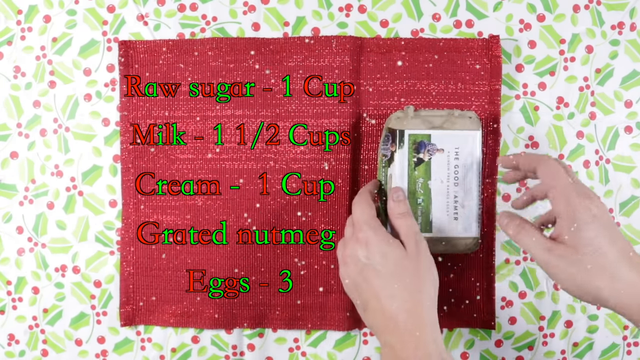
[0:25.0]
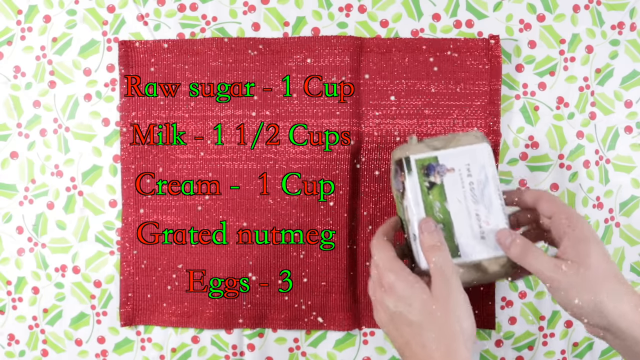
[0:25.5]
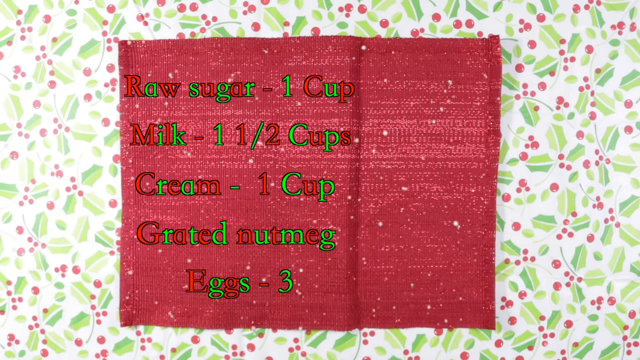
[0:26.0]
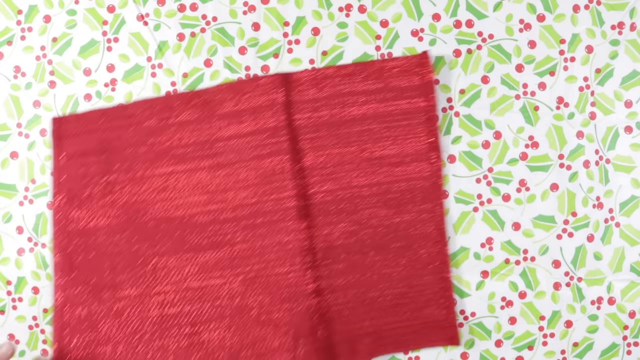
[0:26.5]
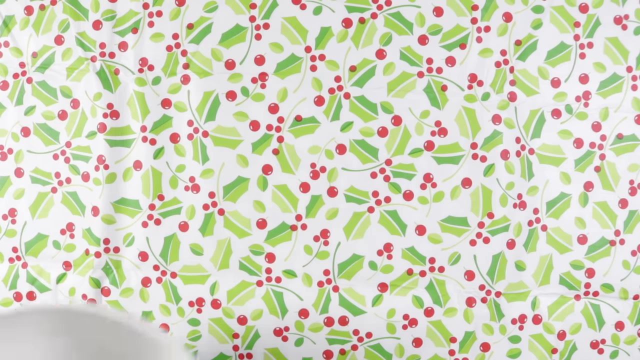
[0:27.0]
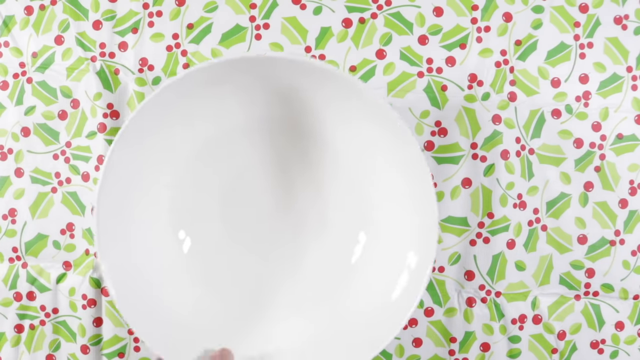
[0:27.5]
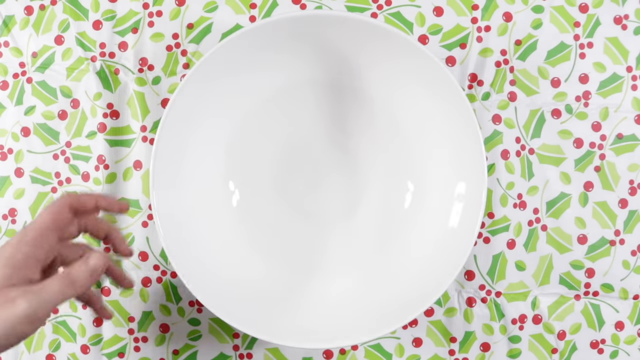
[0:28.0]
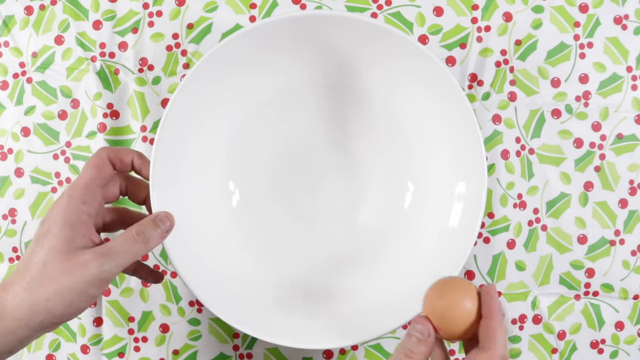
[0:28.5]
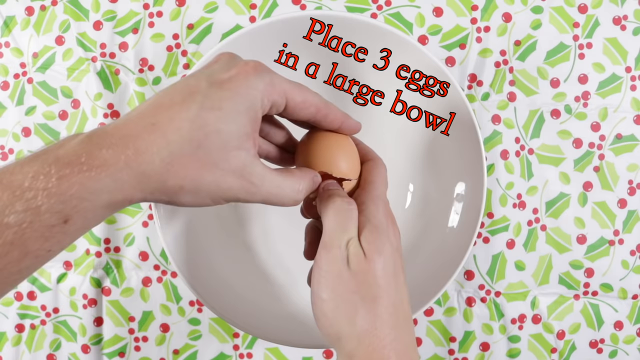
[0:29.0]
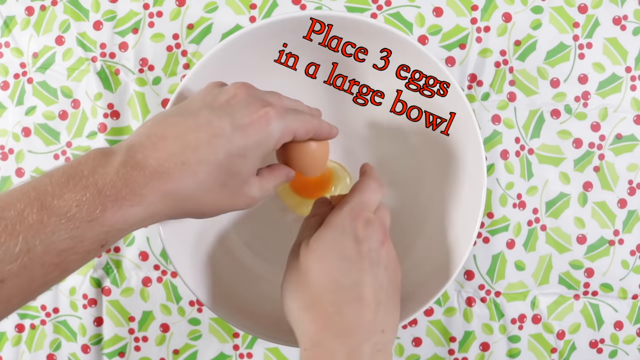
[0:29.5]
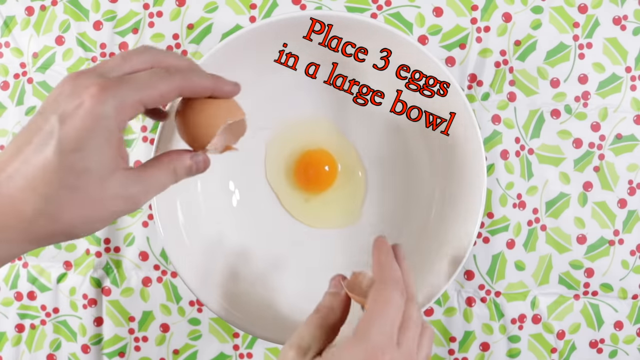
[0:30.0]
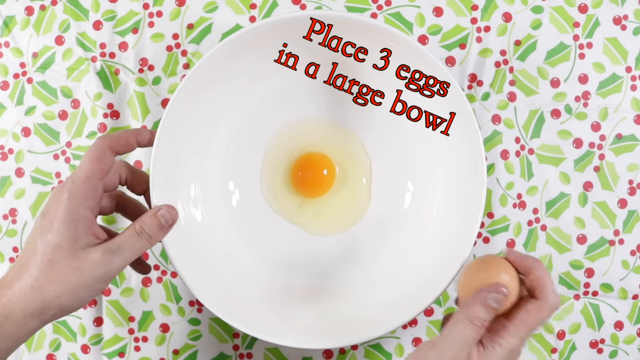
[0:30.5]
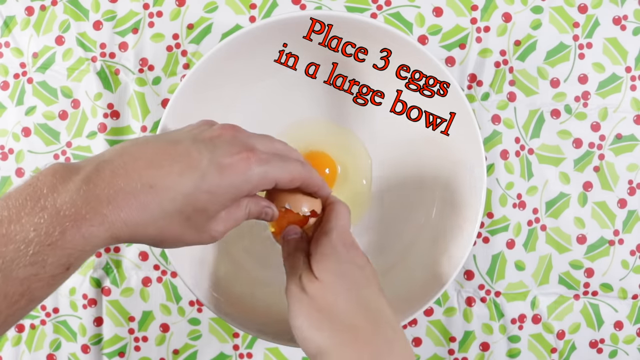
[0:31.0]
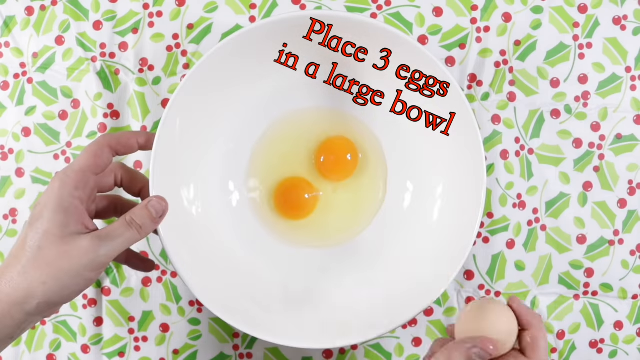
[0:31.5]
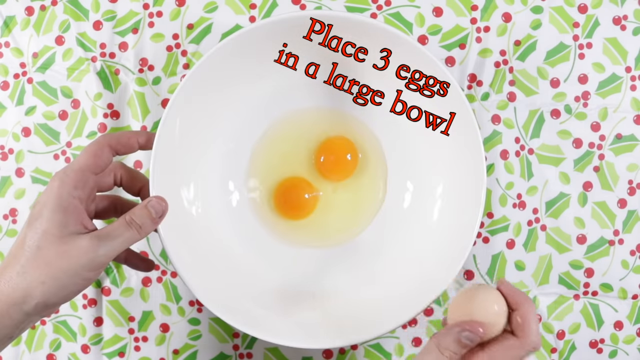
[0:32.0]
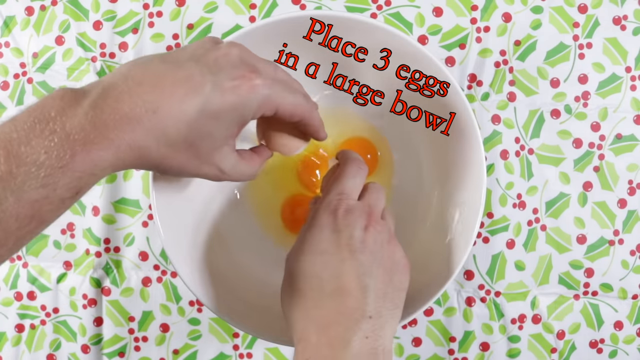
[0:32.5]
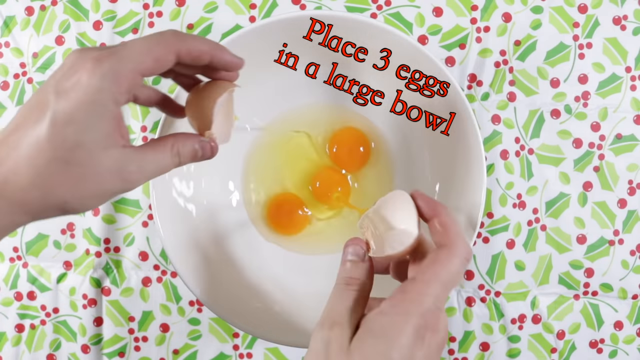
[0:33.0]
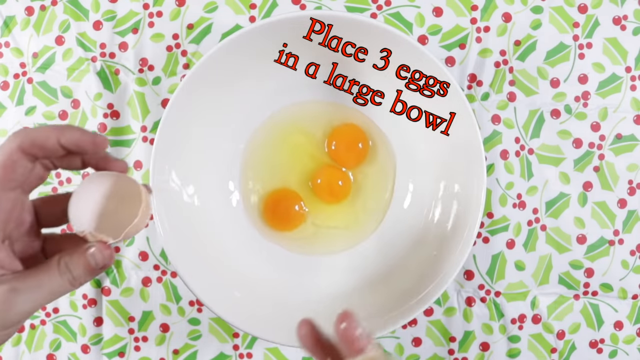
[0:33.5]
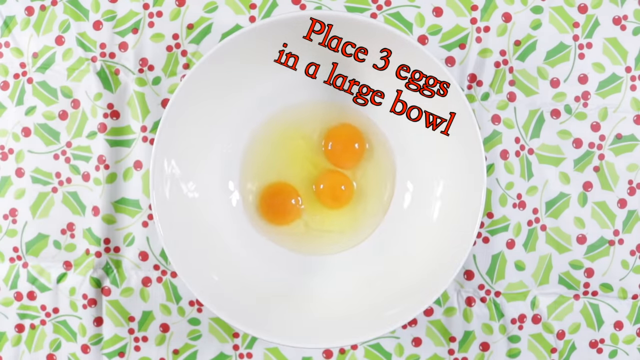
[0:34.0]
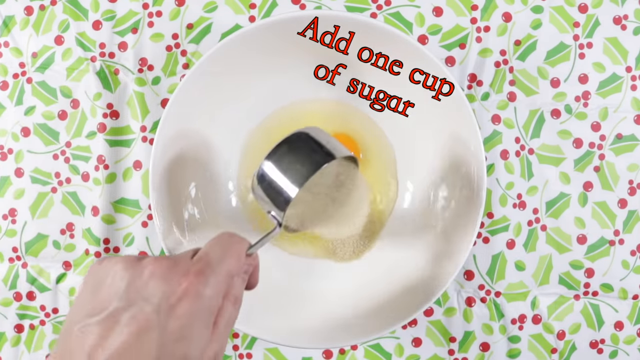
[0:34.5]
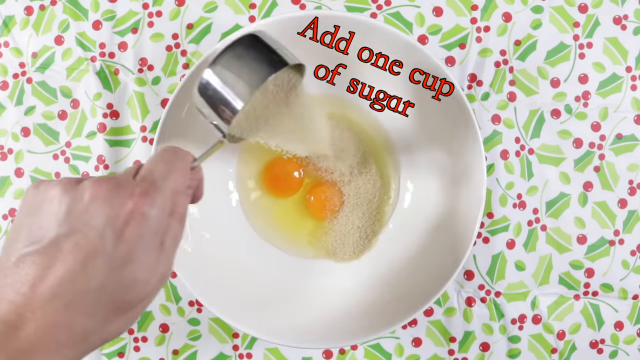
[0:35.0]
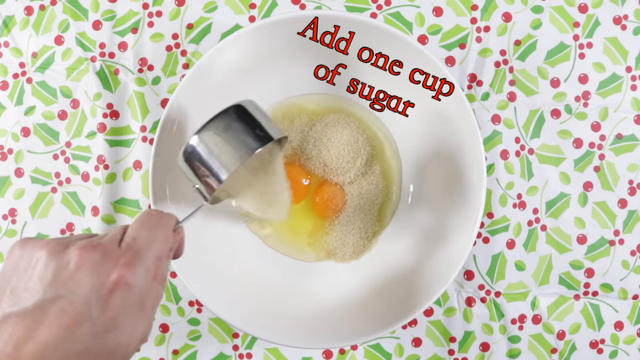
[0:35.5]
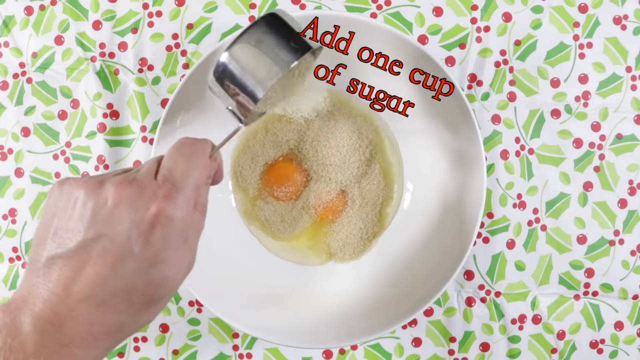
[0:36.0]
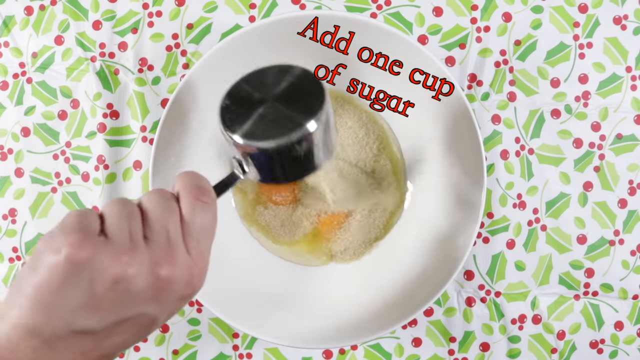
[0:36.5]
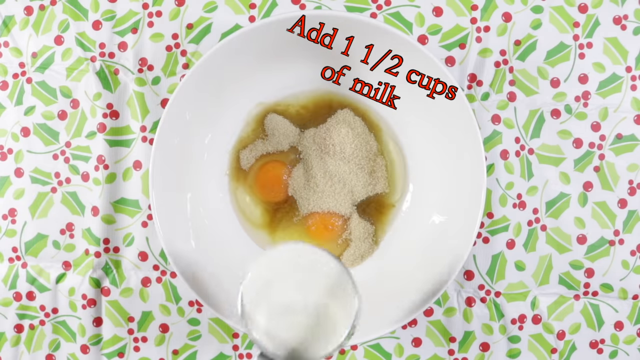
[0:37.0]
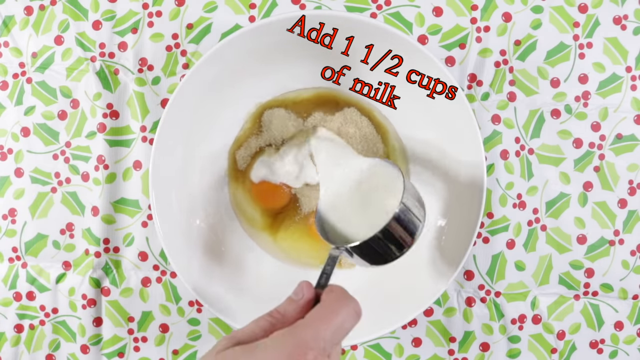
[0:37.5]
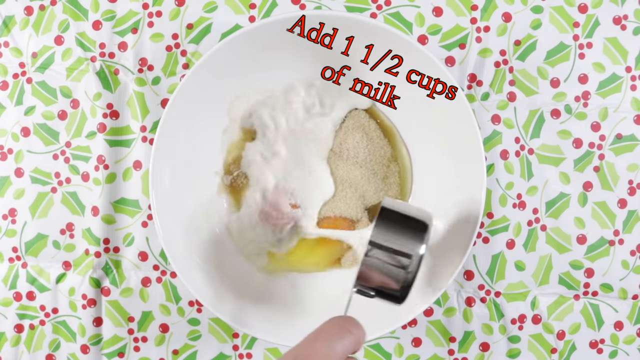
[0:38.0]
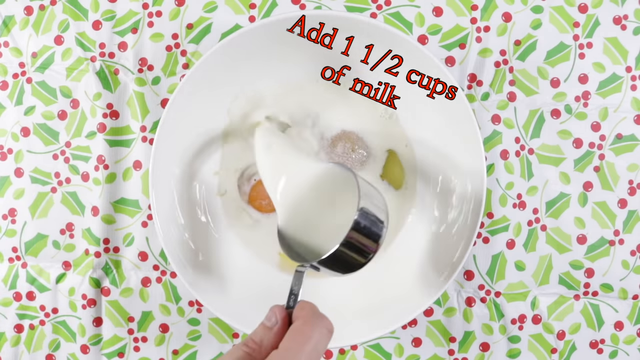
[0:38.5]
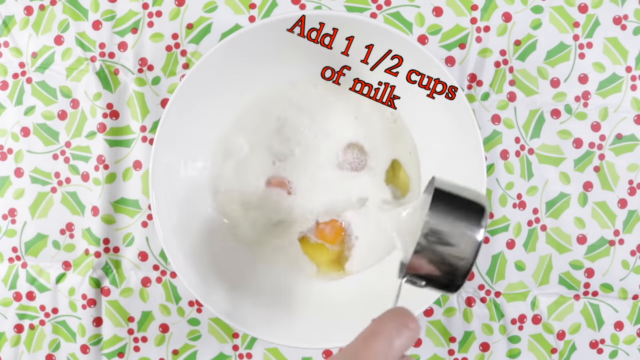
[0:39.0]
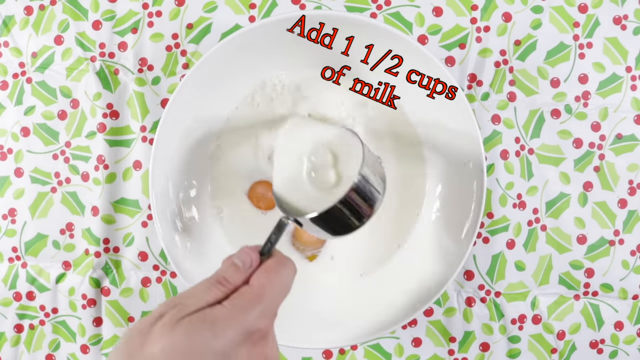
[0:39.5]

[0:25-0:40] The eggs are on the mat with the full ingredient list on the left side: raw sugar, one cup; milk, one and a half cups; cream, one cup; grated nutmeg; eggs, three. The hands remove the box of eggs toward the bottom right of the screen, then remove the mat toward the bottom left. The hand places down what appears to be a plate or a bowl. The text "place three eggs in a large bowl" shows up on the top right side of the bowl as he cracks the first egg, then the second and the third; the three eggs are in the bowl with their yolks intact. The text "add one cup of sugar" replaces the previous text, and the hand pours sugar from a dry measuring spoon over the eggs, covering them. The text then changes to "add one and a half cups of milk", and a similar measuring spoon is used to pour milk into the bowl; the milk splashes in, and another spoonful of milk is poured.